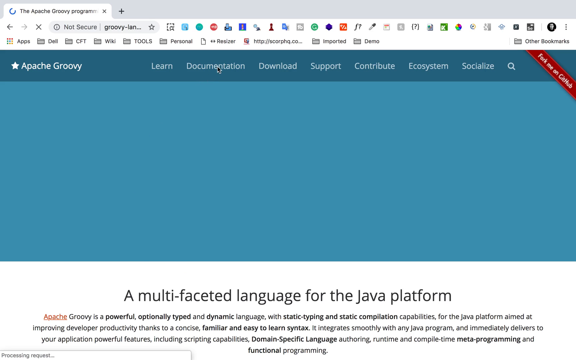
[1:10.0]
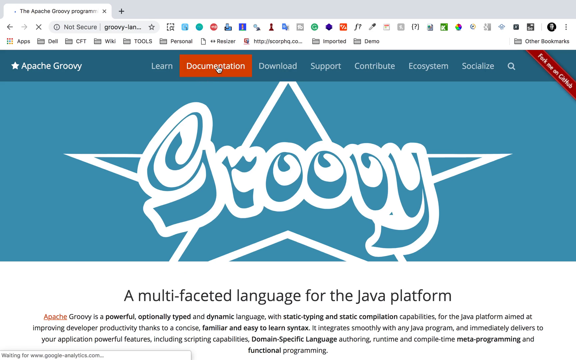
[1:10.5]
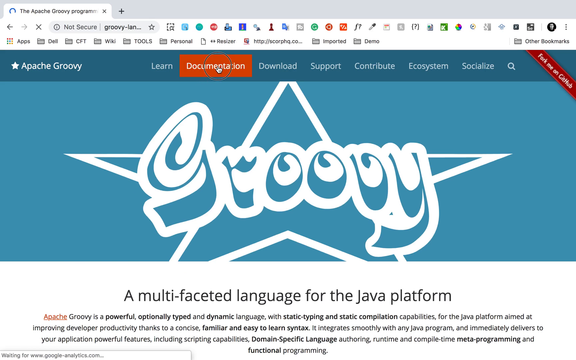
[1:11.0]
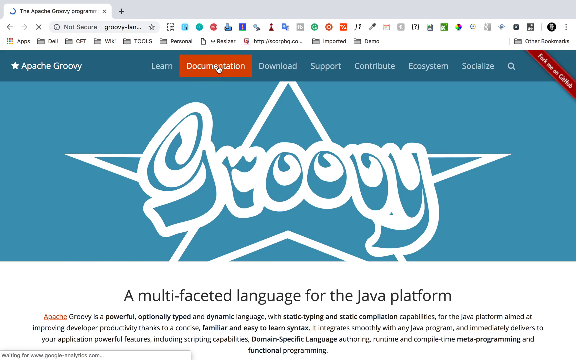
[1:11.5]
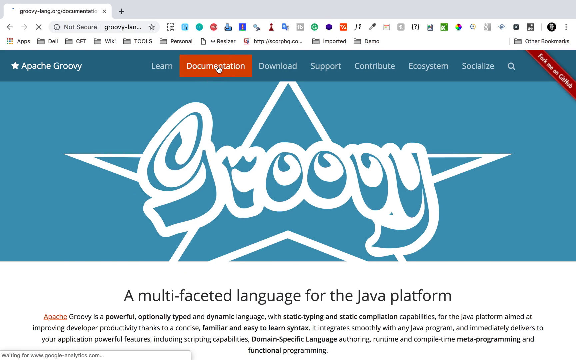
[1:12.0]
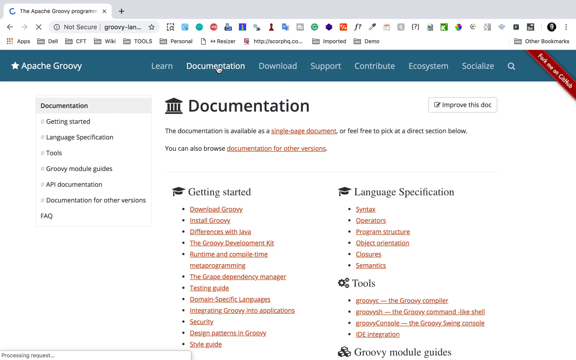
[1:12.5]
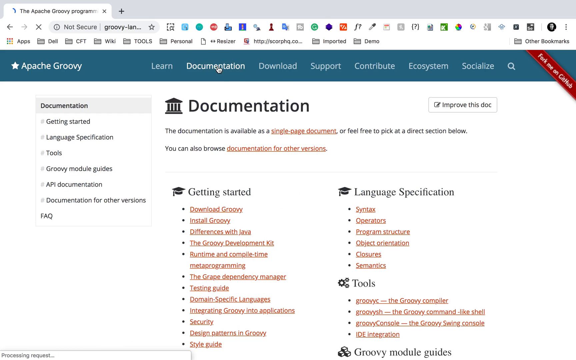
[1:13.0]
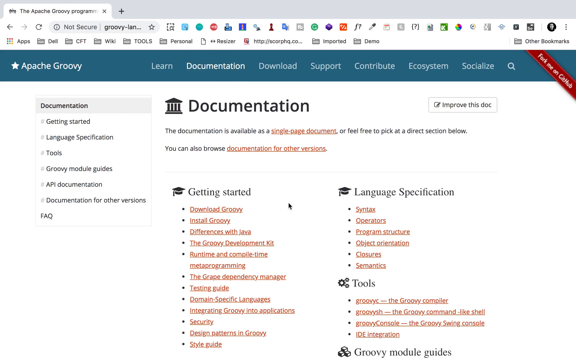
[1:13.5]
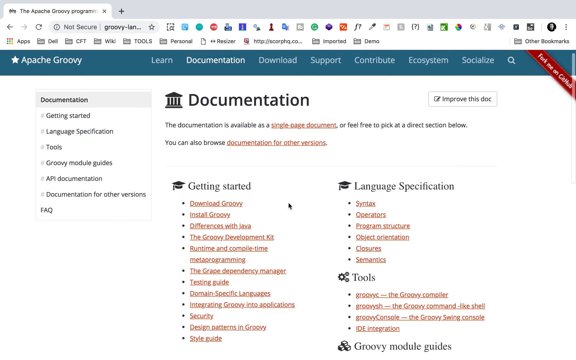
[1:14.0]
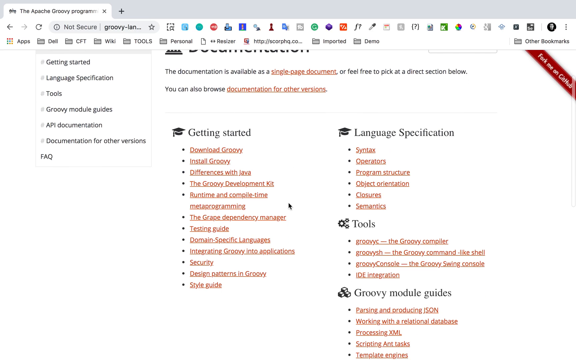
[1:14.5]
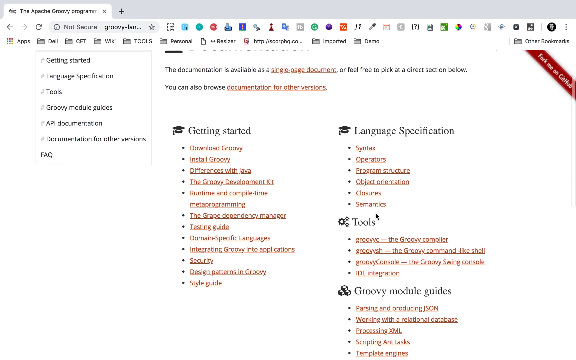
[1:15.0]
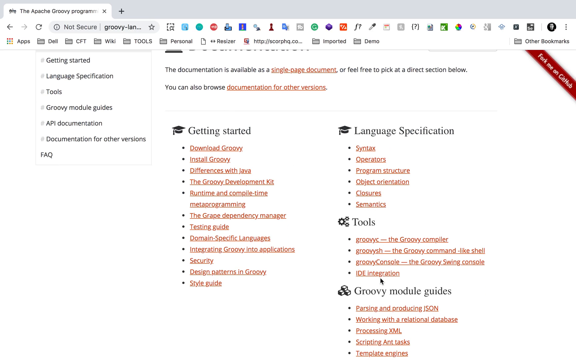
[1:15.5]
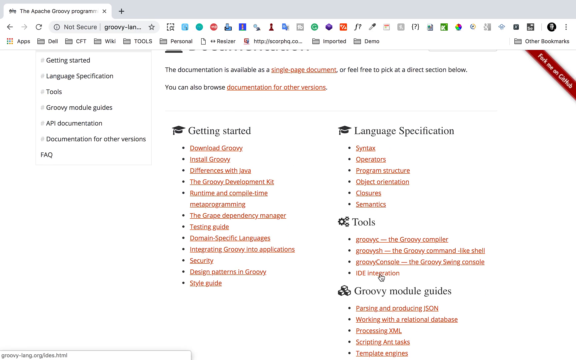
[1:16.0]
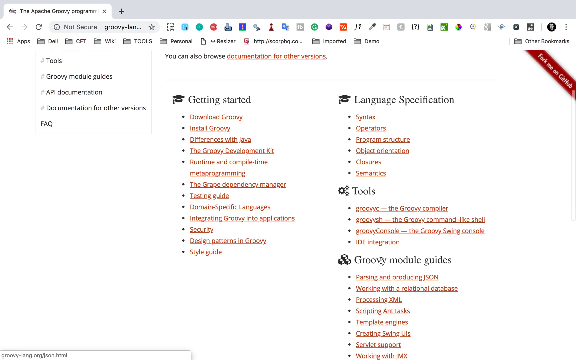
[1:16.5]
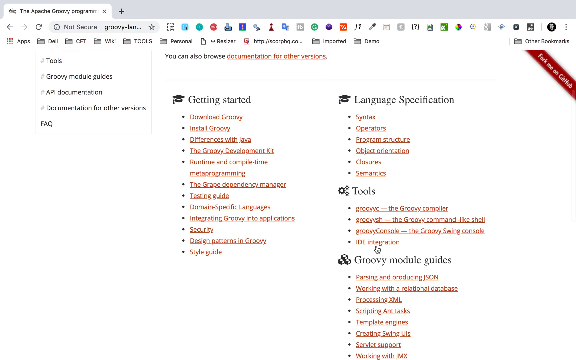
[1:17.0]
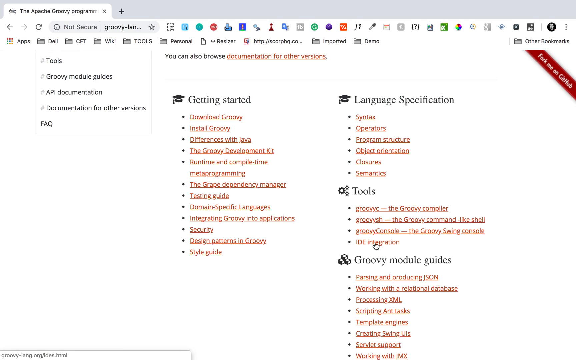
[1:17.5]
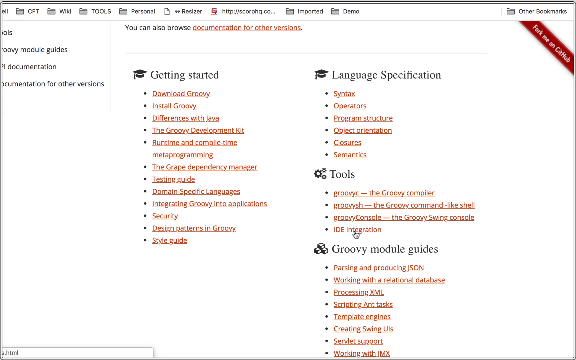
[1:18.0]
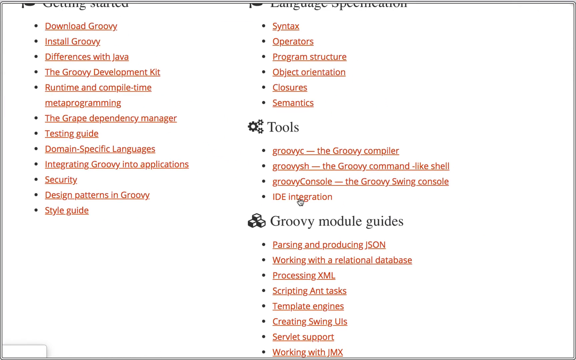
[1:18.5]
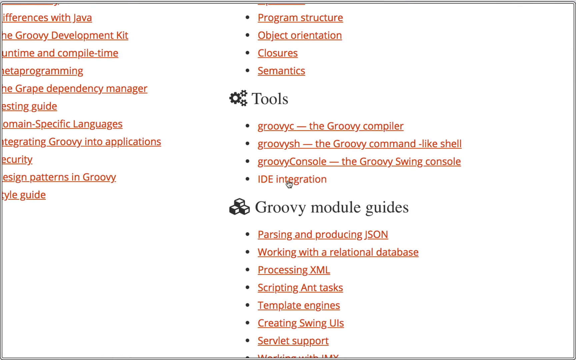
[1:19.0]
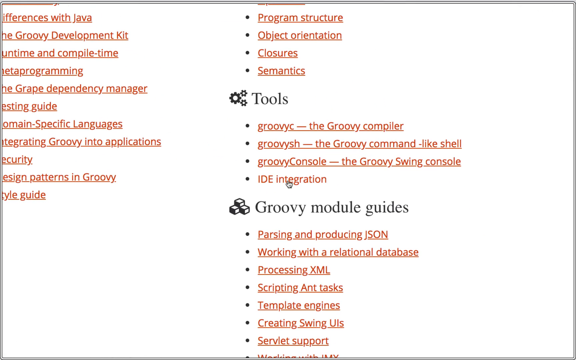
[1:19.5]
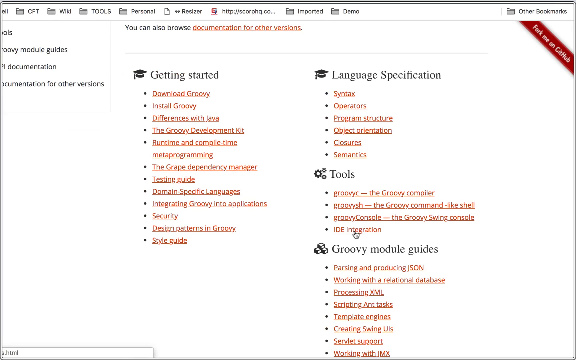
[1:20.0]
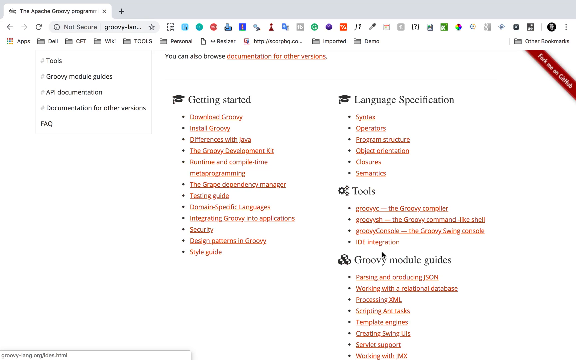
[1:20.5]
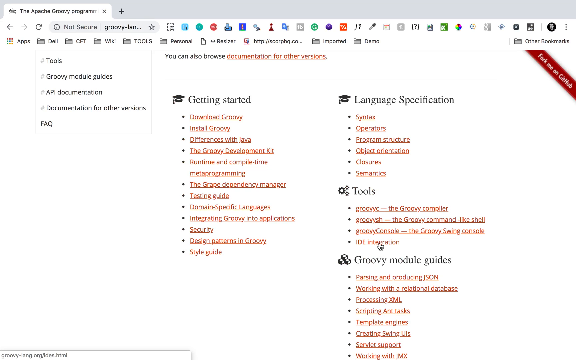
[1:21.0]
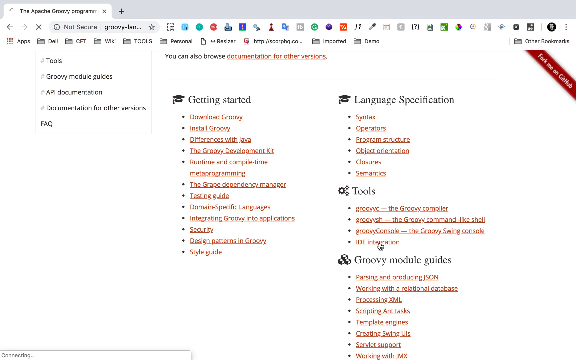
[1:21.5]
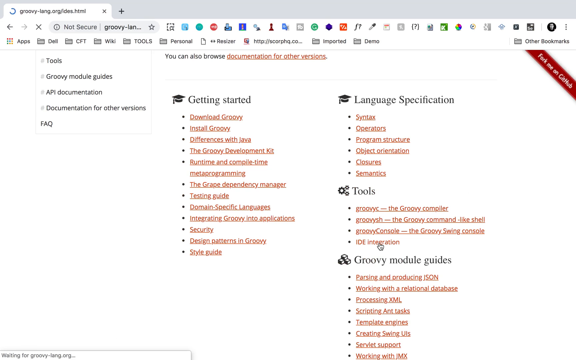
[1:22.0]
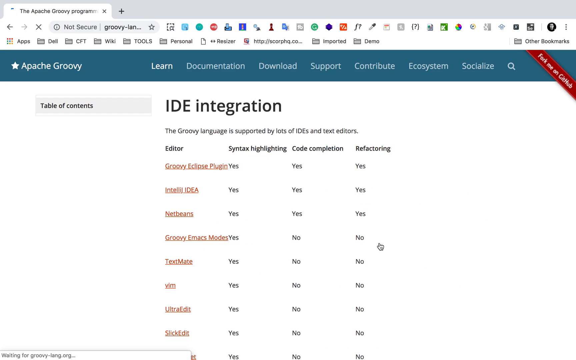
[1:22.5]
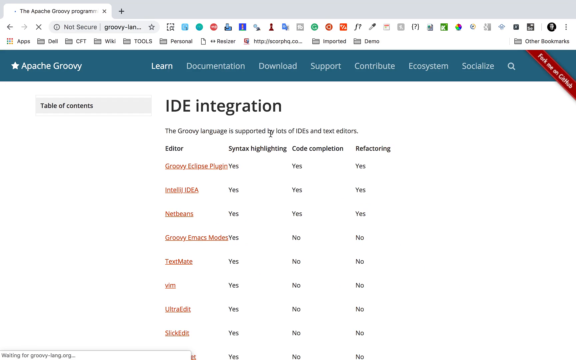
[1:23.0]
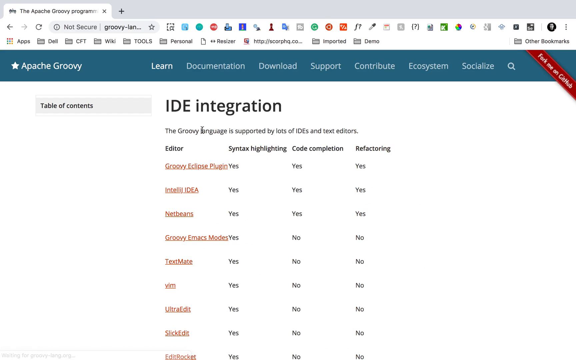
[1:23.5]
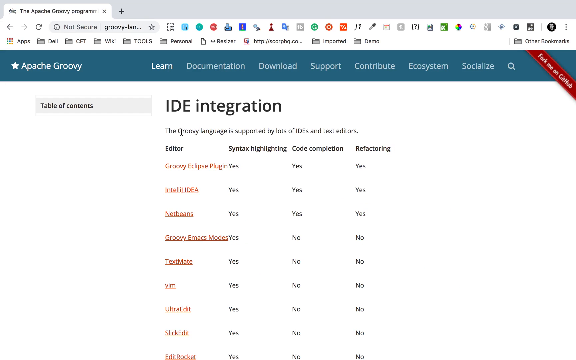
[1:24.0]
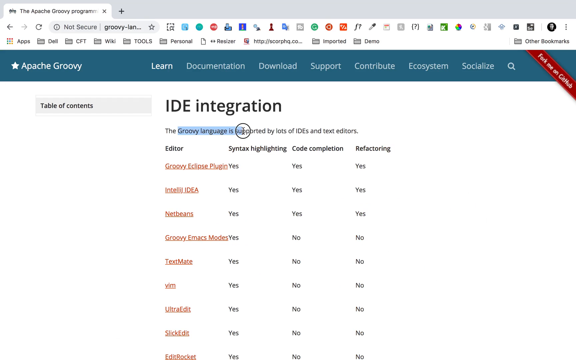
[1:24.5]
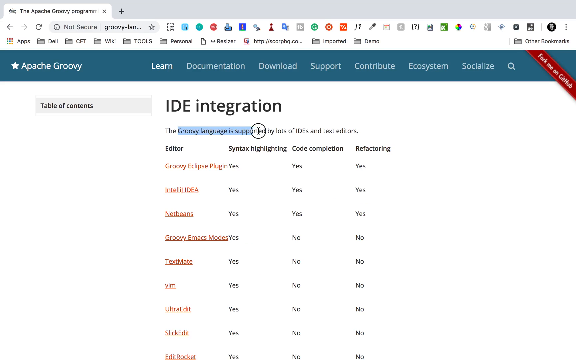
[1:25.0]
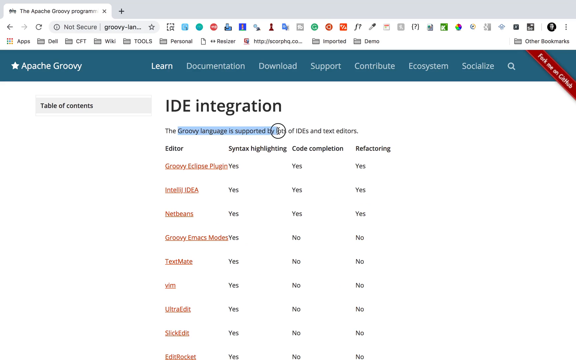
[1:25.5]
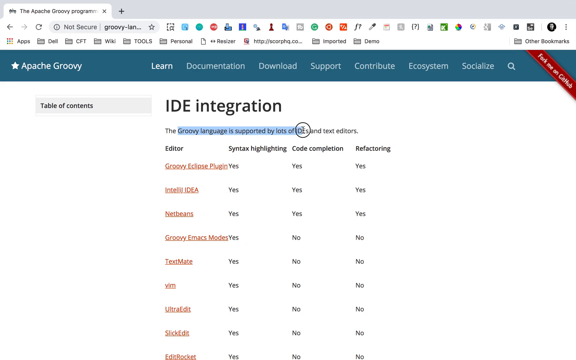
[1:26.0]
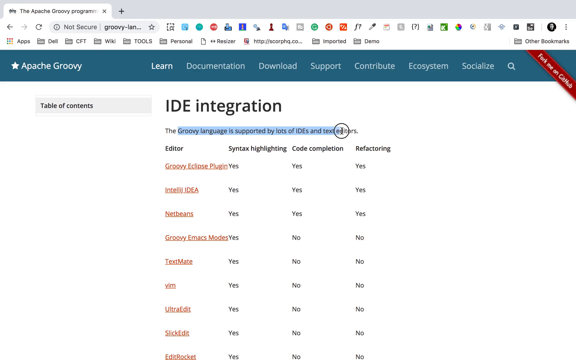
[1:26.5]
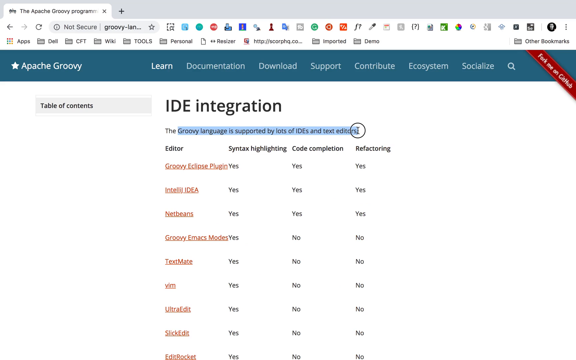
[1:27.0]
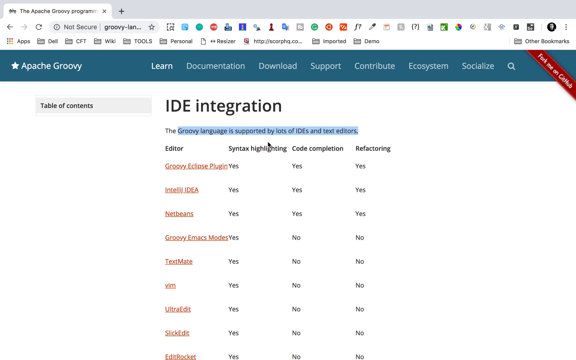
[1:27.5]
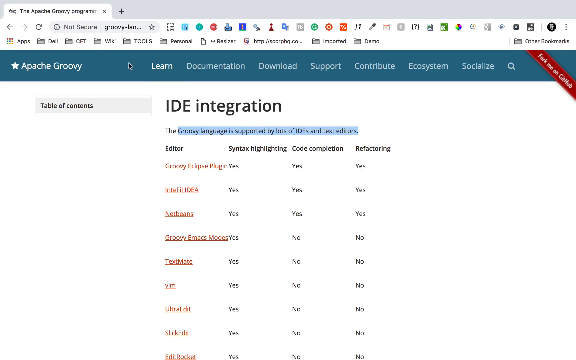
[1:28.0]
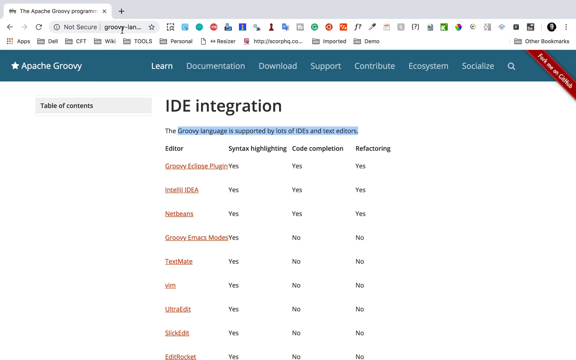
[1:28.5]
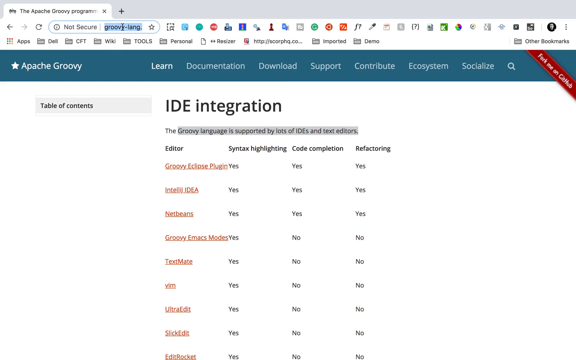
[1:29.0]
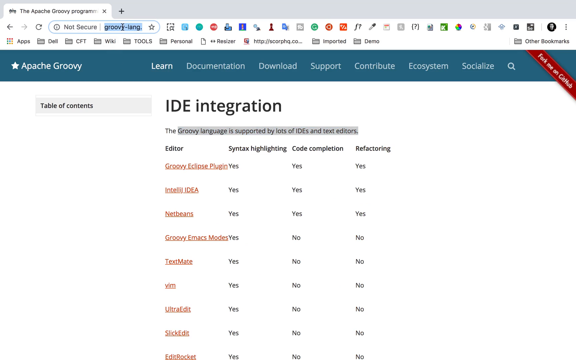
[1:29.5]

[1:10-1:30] A PC monitor shows a web page with many shortcuts on the toolbar at the top, multiple app shortcuts below them, and a folder for other bookmarks to the right. The page is for Apache Groovy and has seven tabs: Learn, Documentation (where the cursor is), Download, Support, Contribute, Ecosystem and Socialize, followed by a search magnifying glass. The body of the page is mostly light blue, with a grayish section at the bottom that also contains text. The title reads "A Multifaceted Language with a Java Platform", followed by the word "Apache" in red and black text describing it in great detail. The logo in the blue section is a star and the word groovy in a very fancy, cursive-like font. The person clicks the Documentation tab, which brings up multiple bullet points; they make it larger and then highlight a section beneath IDE integration.